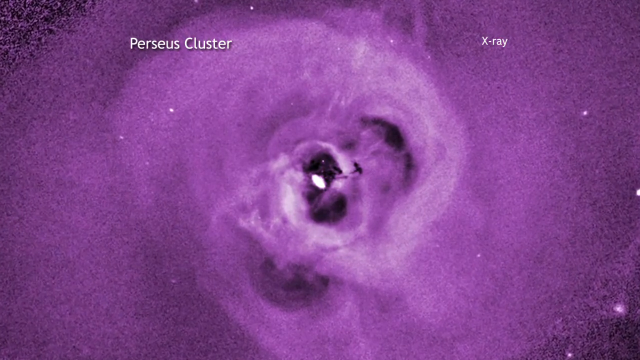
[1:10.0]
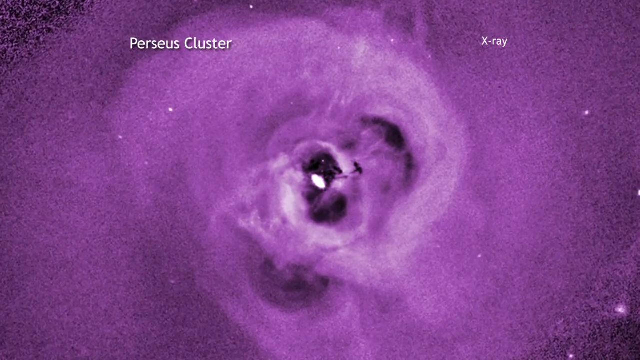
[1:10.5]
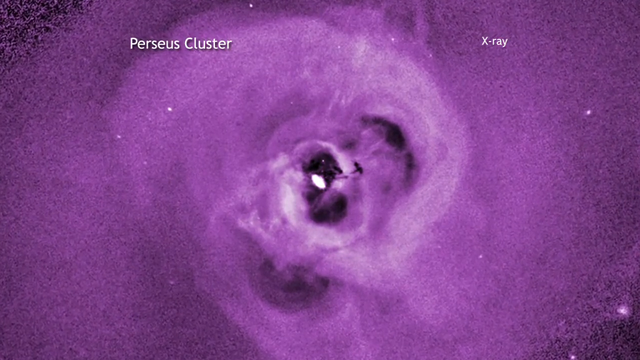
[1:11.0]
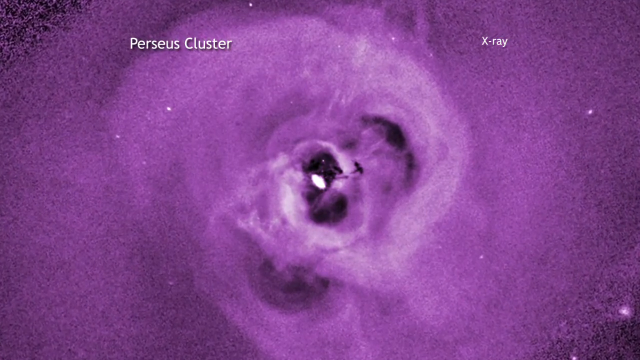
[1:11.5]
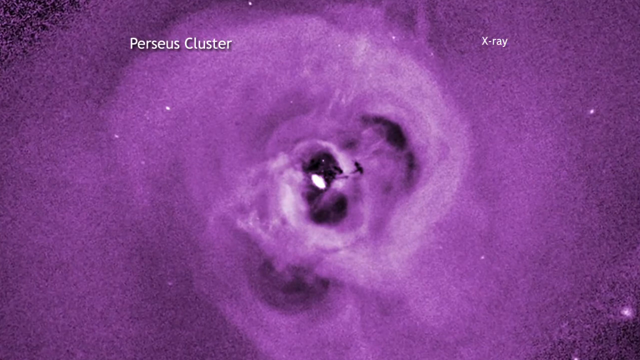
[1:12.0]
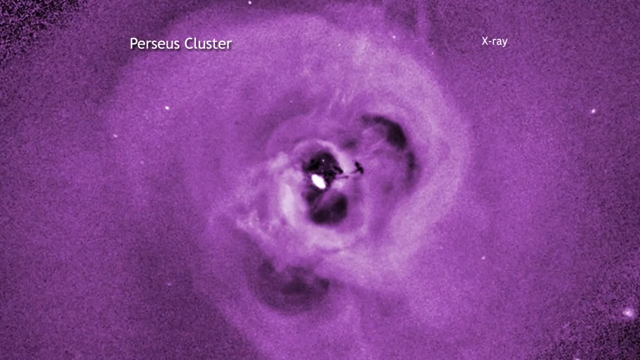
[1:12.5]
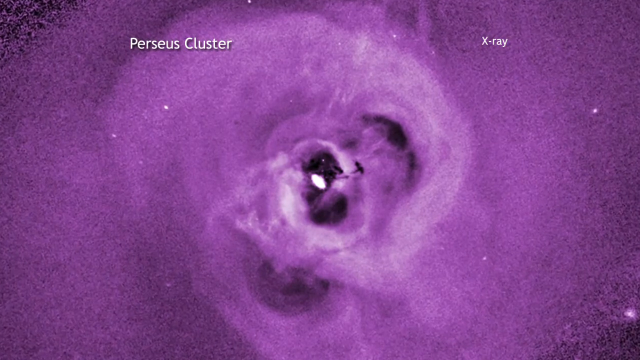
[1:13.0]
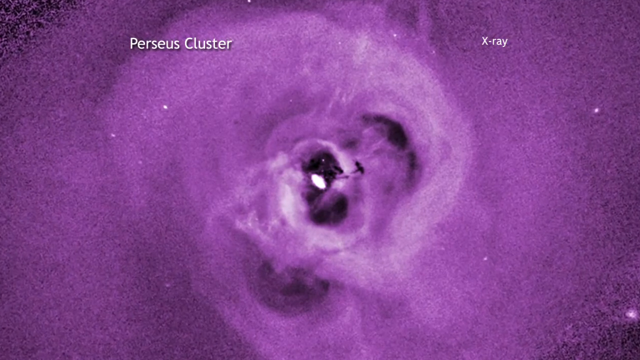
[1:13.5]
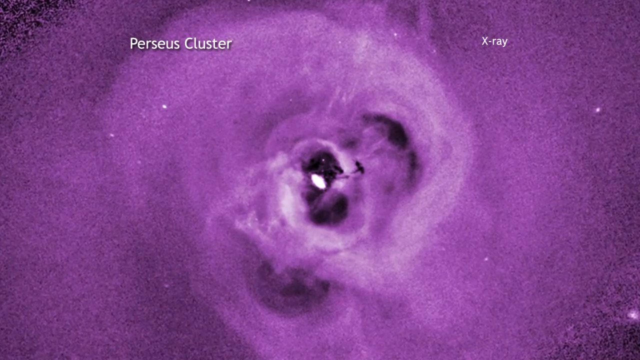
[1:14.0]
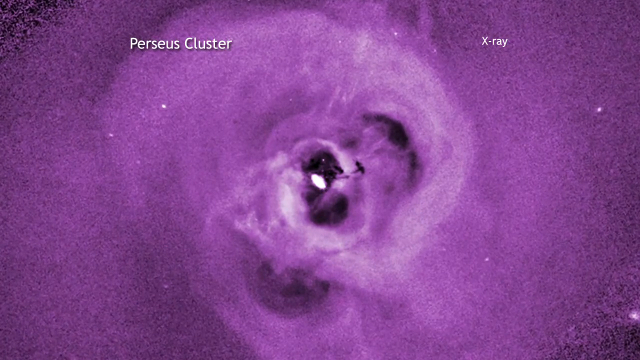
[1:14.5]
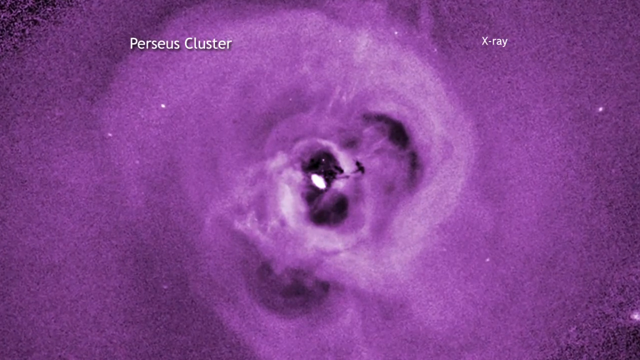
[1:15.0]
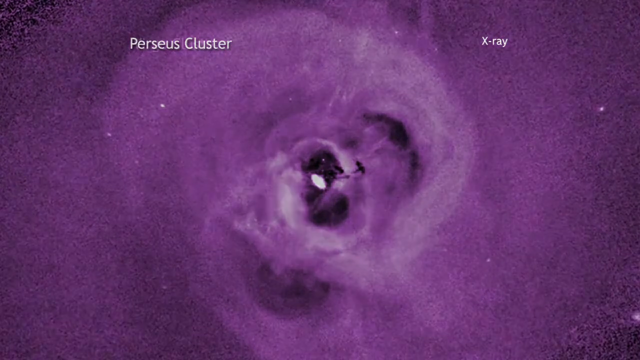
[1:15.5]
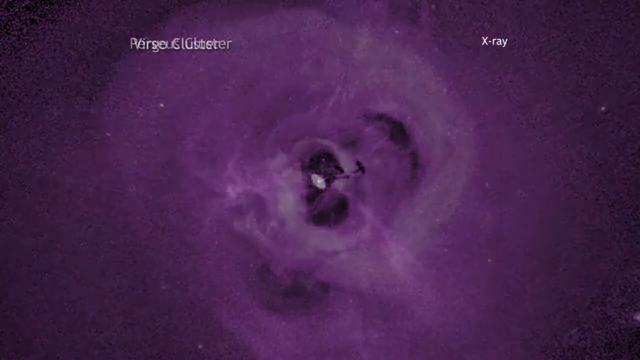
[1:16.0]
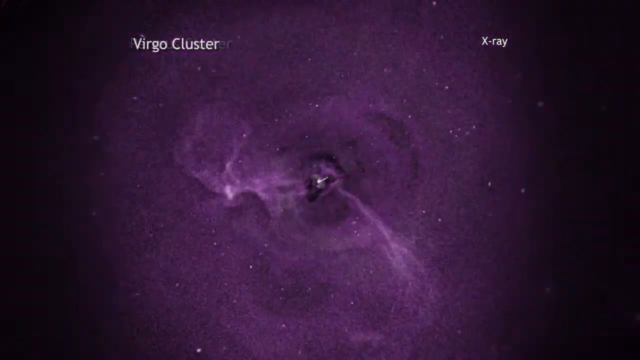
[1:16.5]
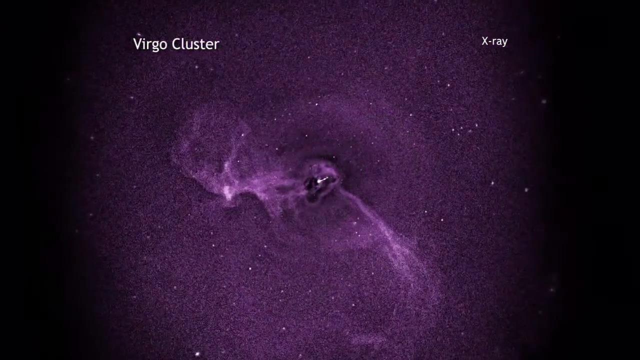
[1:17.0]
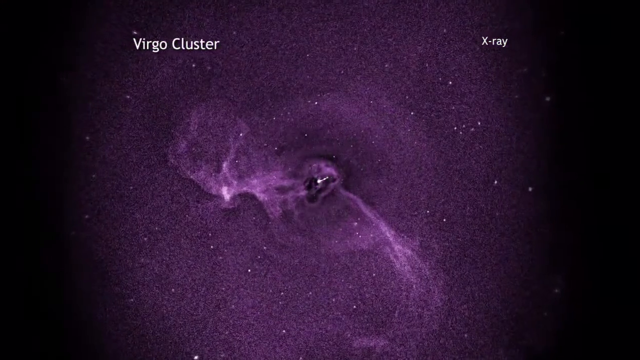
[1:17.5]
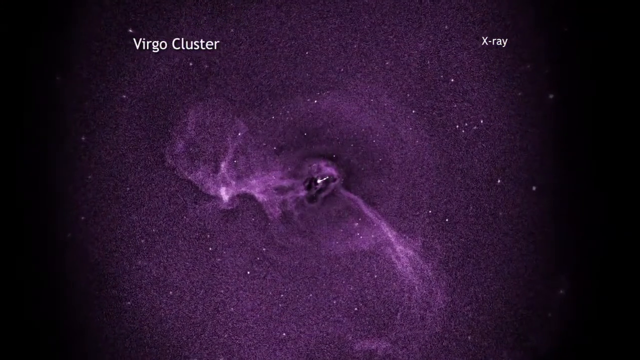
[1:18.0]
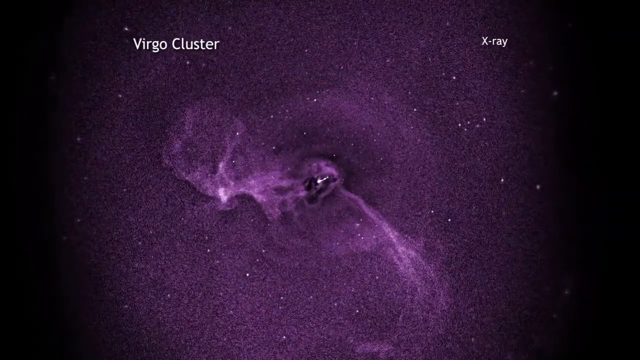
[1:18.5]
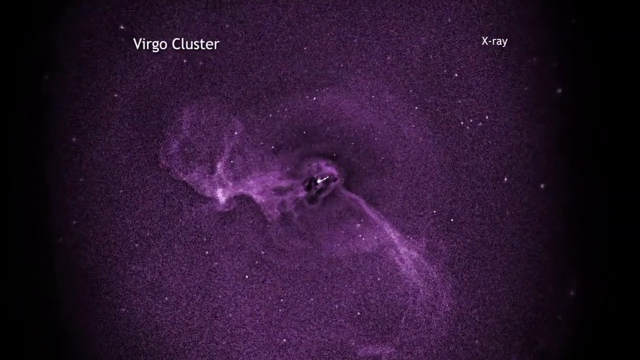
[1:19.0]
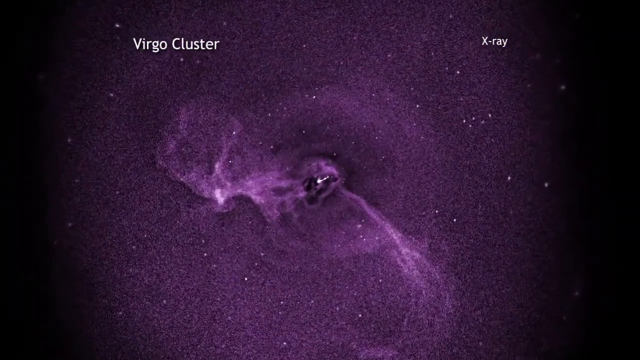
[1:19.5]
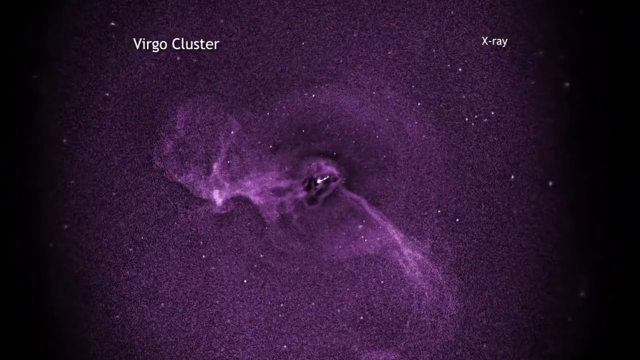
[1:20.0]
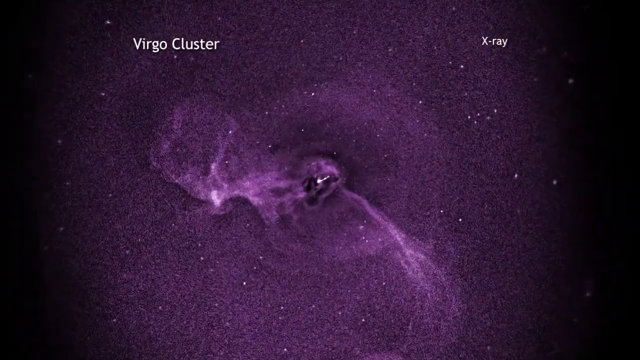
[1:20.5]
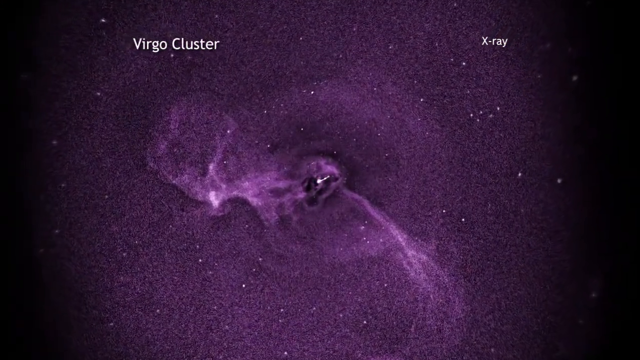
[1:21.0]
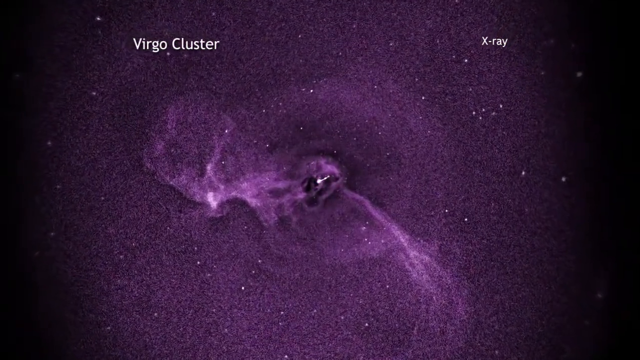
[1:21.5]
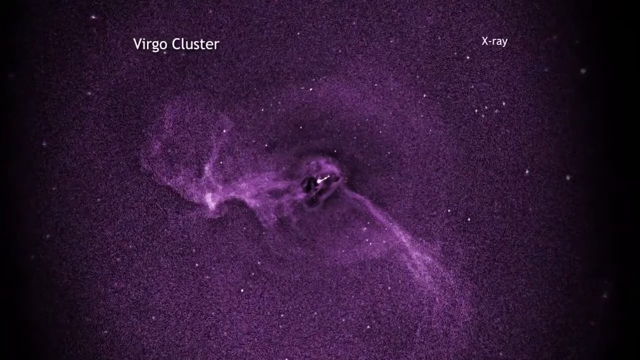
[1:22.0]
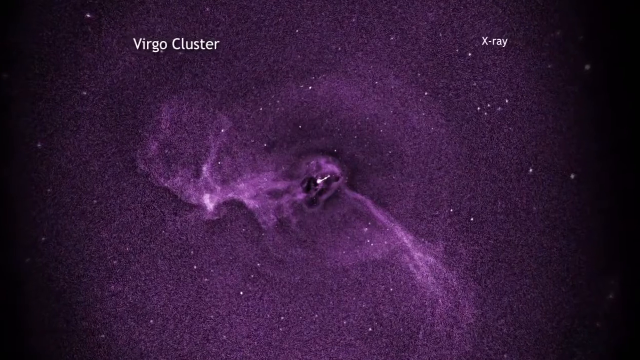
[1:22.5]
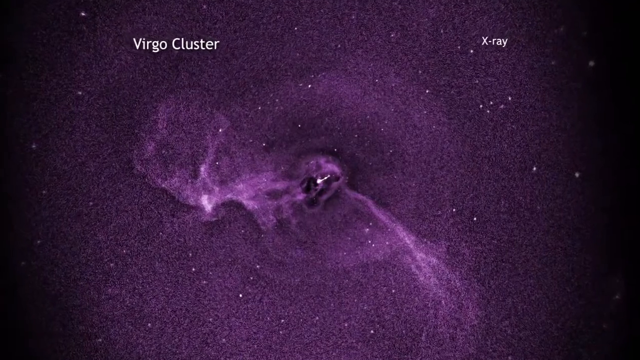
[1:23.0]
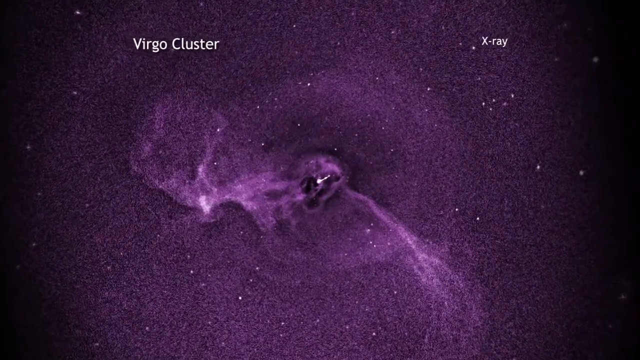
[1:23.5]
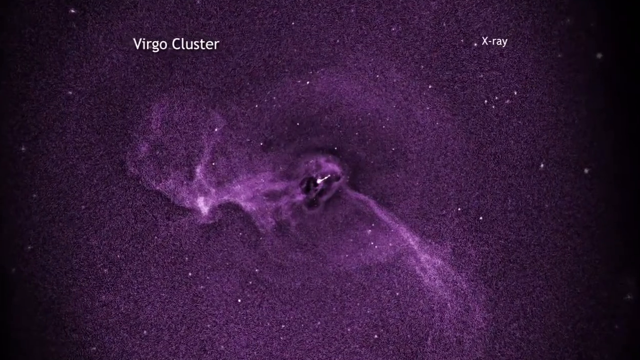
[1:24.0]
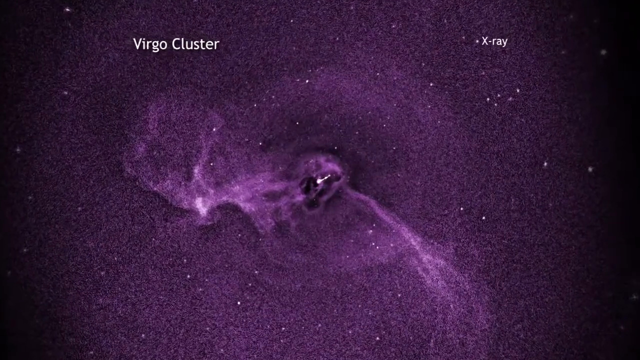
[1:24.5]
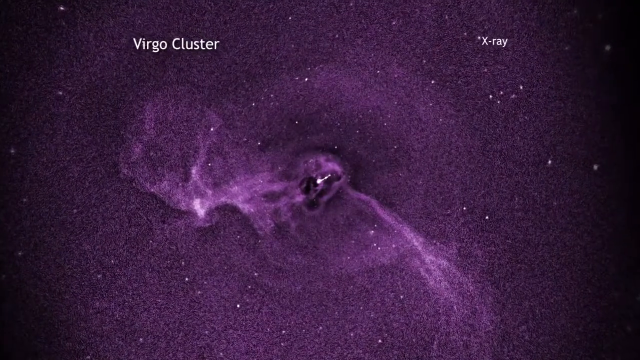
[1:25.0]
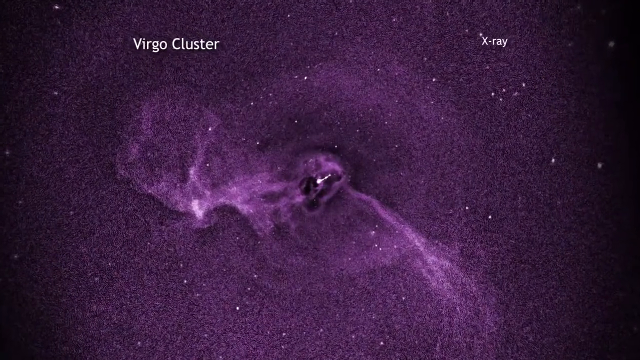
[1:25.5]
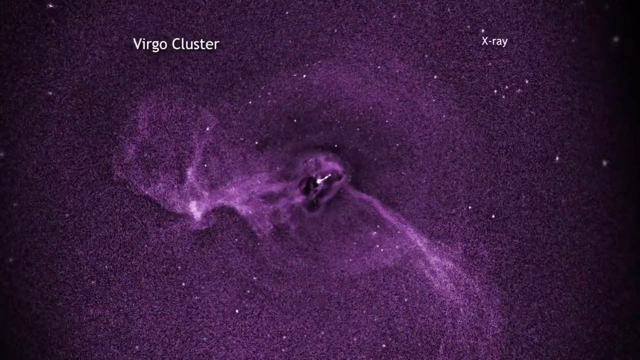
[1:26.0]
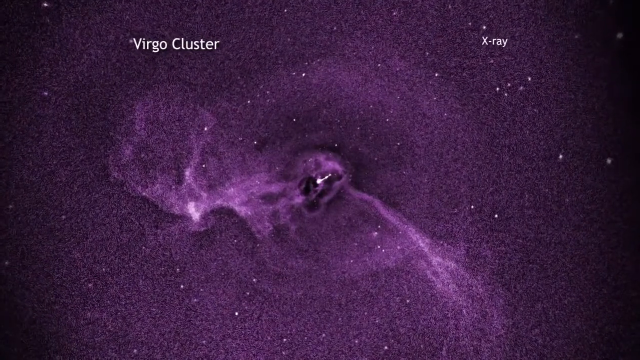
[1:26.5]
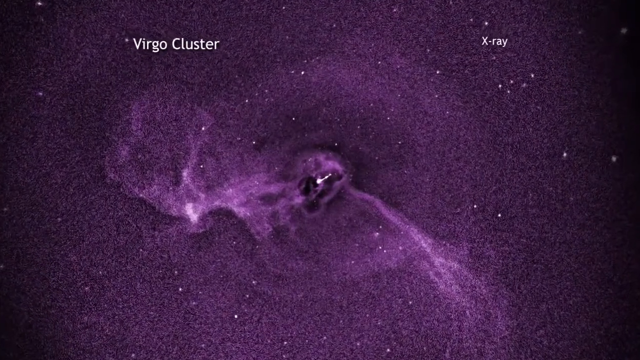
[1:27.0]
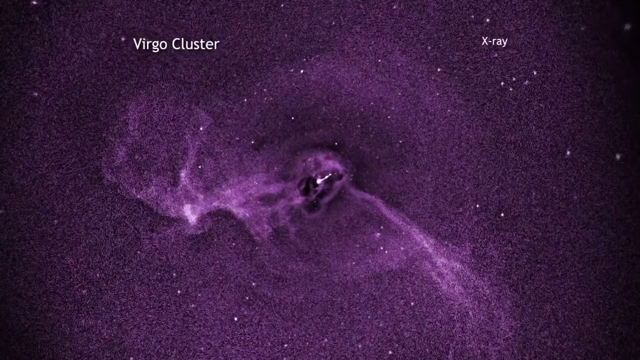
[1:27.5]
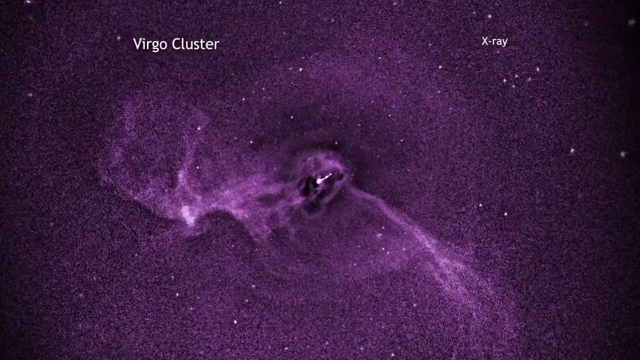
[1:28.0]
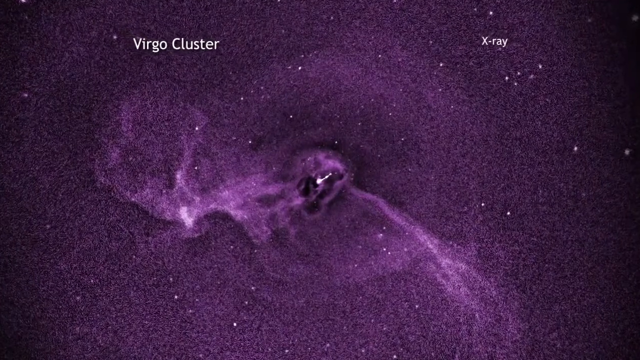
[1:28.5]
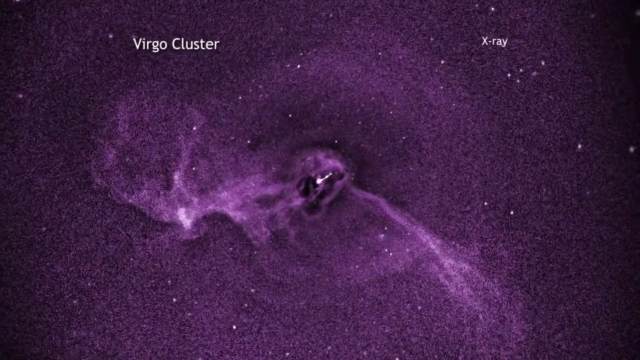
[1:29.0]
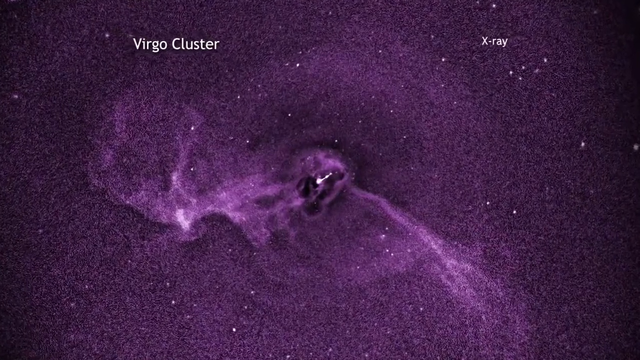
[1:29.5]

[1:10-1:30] The picture of the Perseus cluster is zoomed into further and further. Its general structure almost resembles the petals of a flower, with a stigma in the middle and white rounded petals on the outside. The dots or stars that make up the different purple parts of the structure are visible even where the structure is thick, and they become more prominent where the cluster is thinner. The video then fades to a different star cluster, the Virgo cluster, with white text on top reading "Virgo Cluster" in slightly bigger letters and the same smaller "x-ray" text as before. The Virgo cluster is shown in different purple colors with a white and black center.